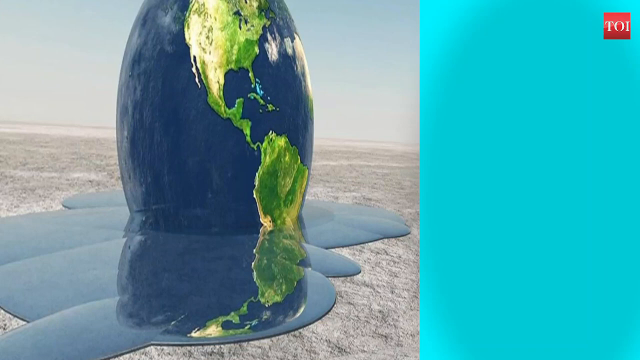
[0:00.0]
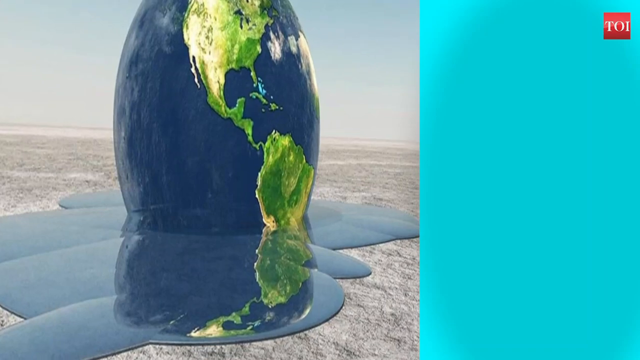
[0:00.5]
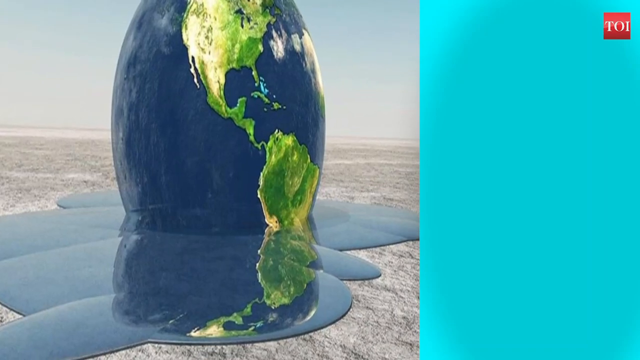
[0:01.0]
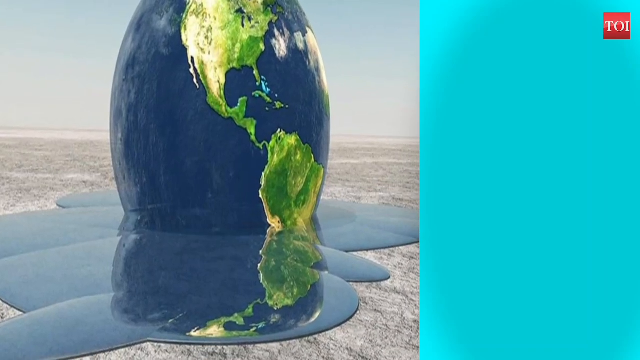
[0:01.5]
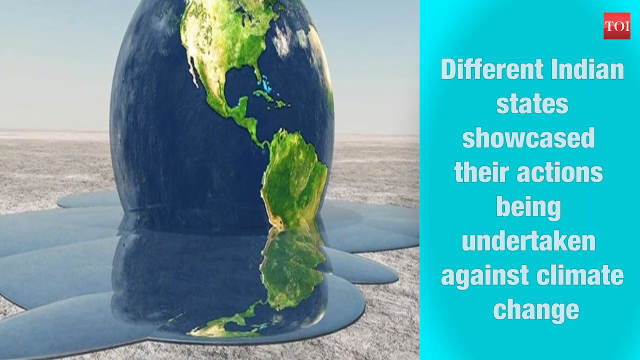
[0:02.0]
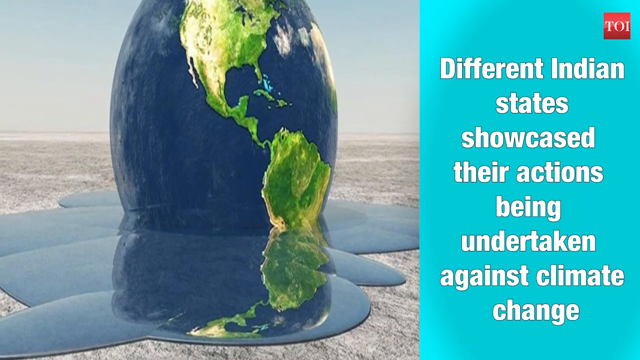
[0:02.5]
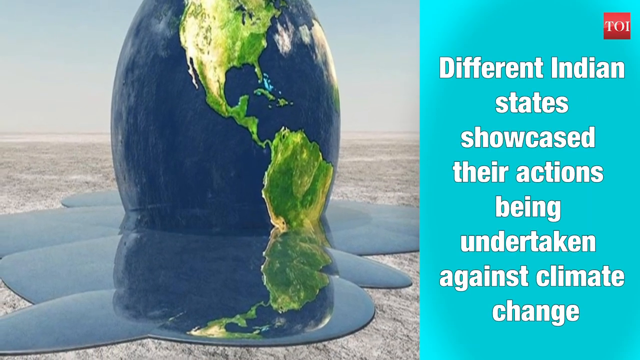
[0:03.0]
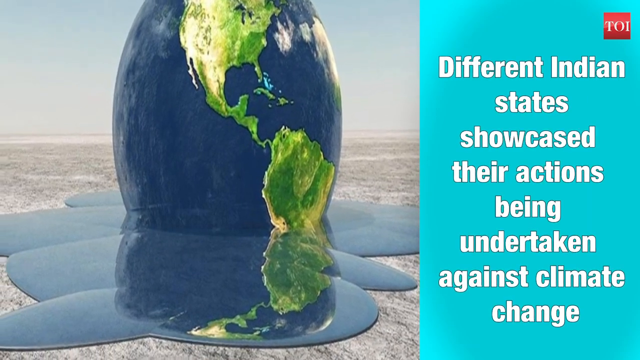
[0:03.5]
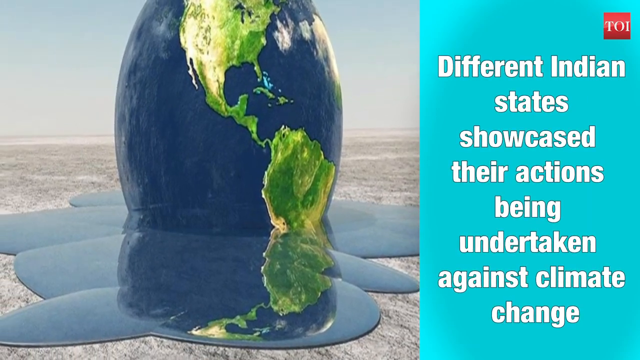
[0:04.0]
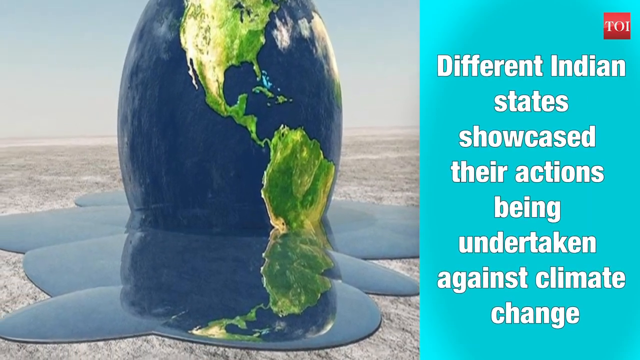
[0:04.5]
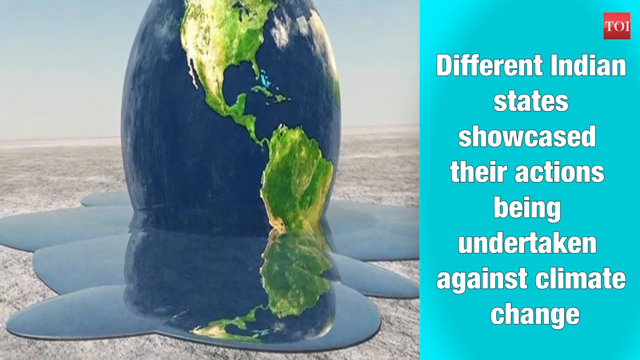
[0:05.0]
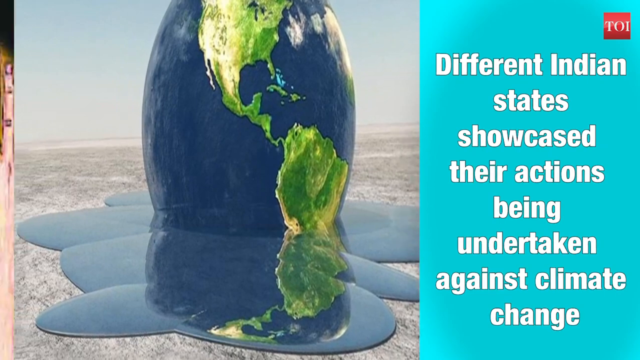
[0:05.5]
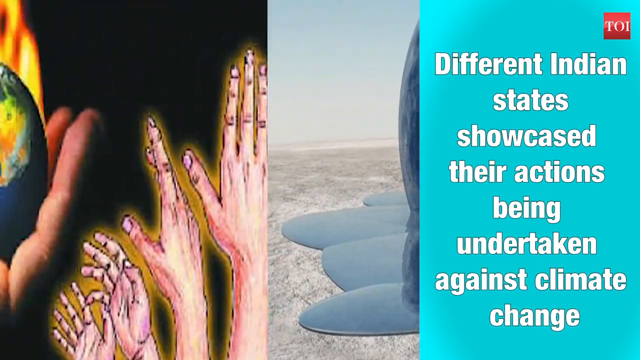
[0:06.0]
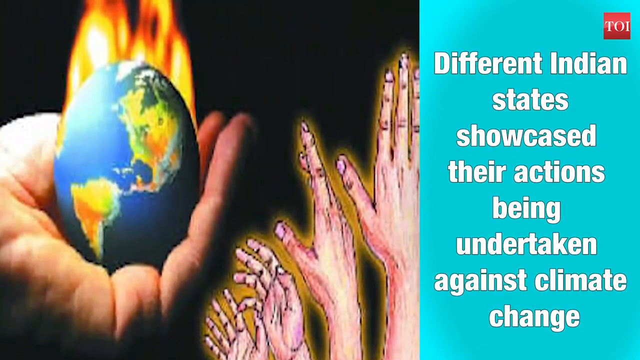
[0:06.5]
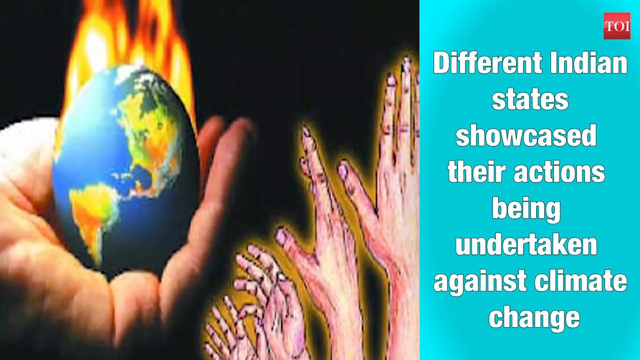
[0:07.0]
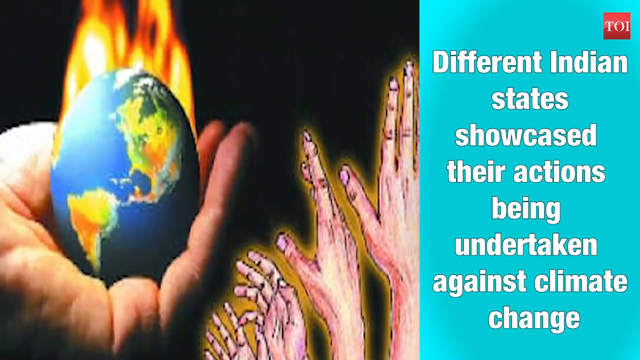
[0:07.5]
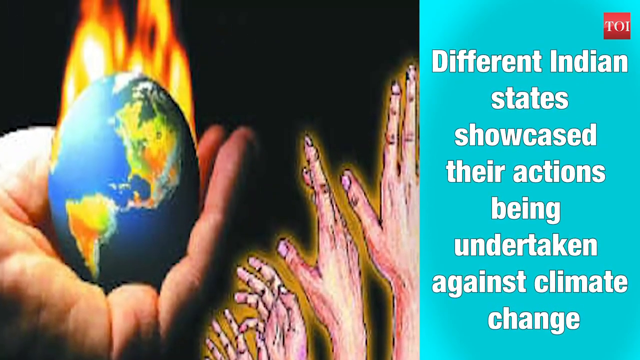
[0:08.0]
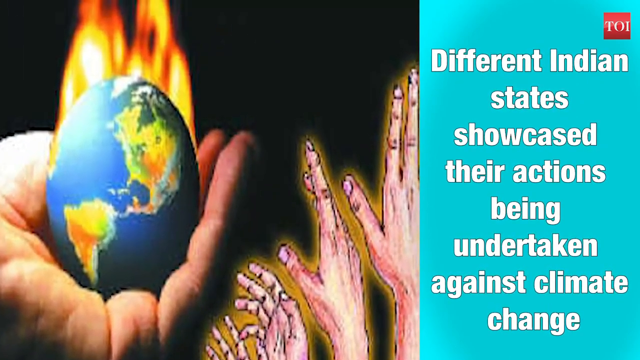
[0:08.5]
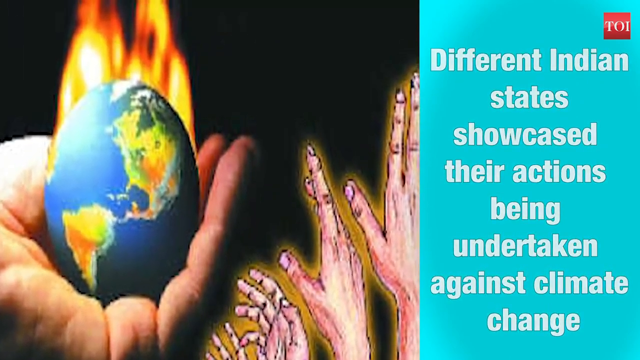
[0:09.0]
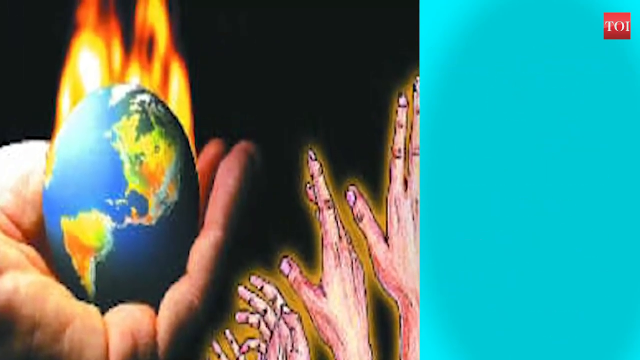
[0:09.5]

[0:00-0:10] On an aqua background, a red square in the upper right-hand corner says "TOI" in white. On the left side is an oblong image of the earth melting into a puddle on something like sand or dirt. It rotates so that its flat side becomes visible, where before a curved side faced the viewer. White text on the aqua section reads "different Indian states showcase their actions being undertaken against climate change", and the earth rotates further. The image then changes to what looks like a very grainy, pixelated stock photo of a hand holding the earth with flames on it, alongside a strange illustrated, glowing set of hands: one placed flat with its thumb out, another kind of curved, and another facing the viewer with its fingers. The shot zooms in on this image.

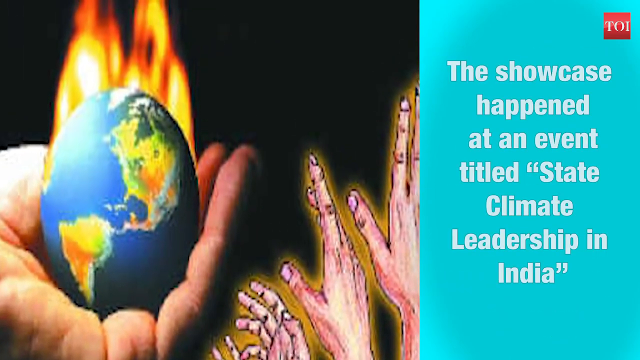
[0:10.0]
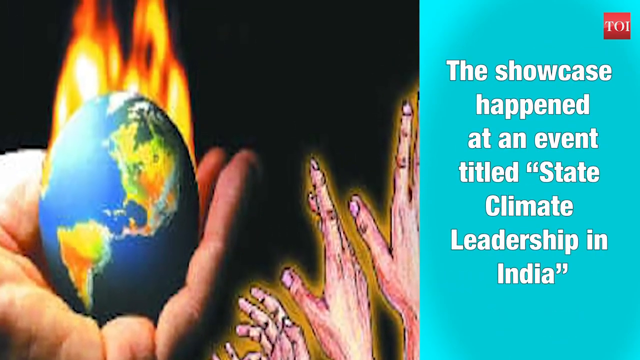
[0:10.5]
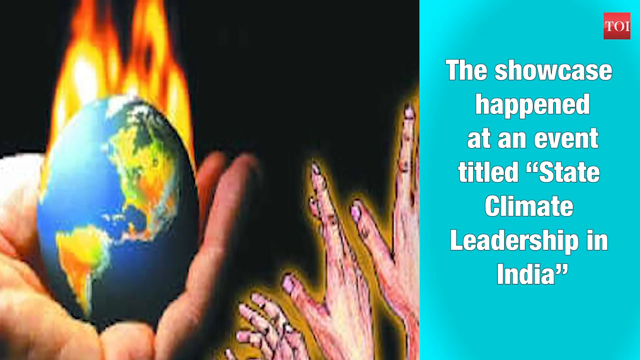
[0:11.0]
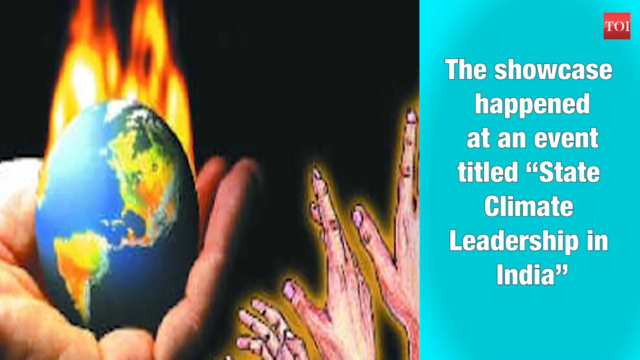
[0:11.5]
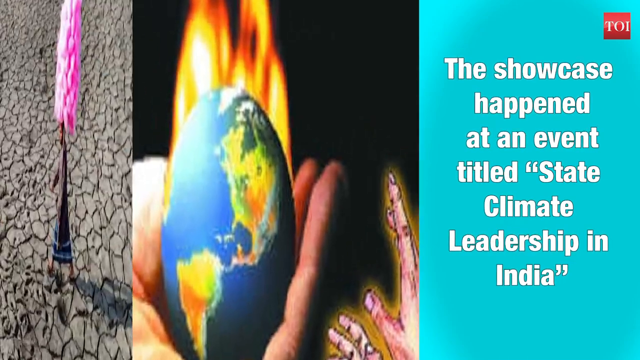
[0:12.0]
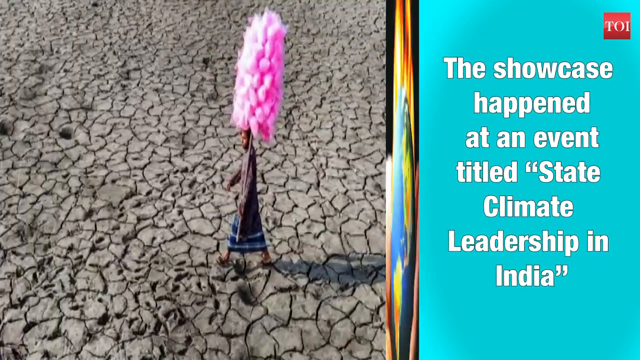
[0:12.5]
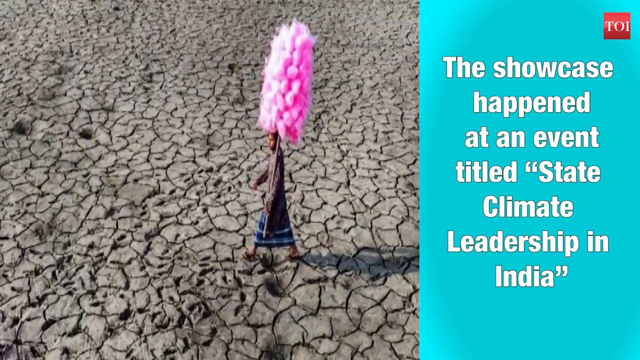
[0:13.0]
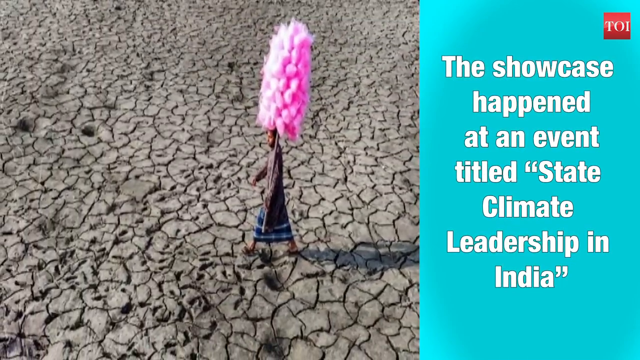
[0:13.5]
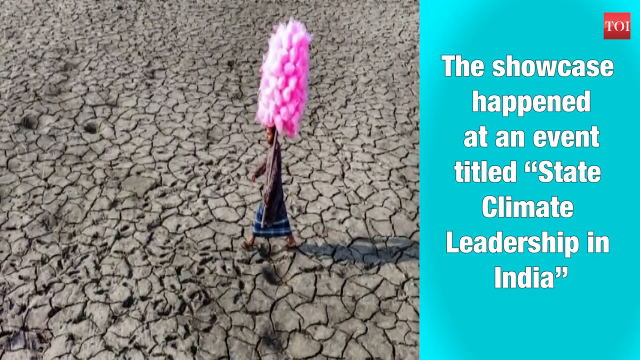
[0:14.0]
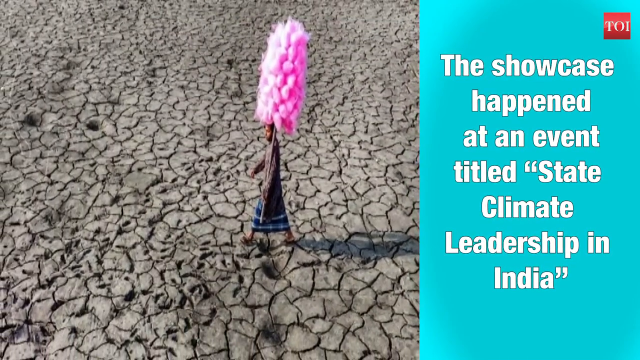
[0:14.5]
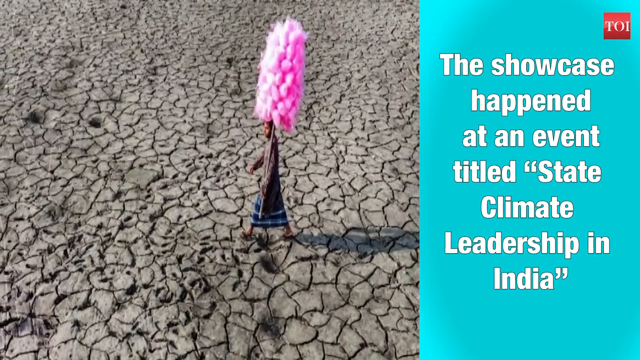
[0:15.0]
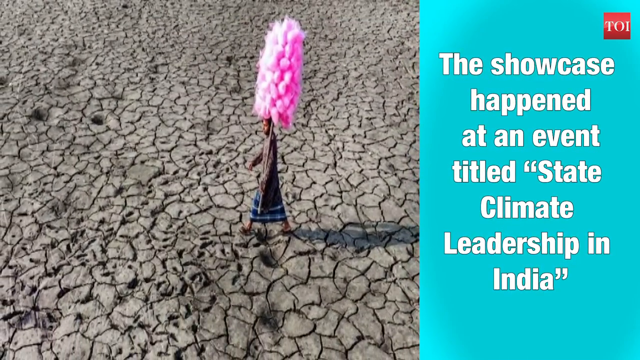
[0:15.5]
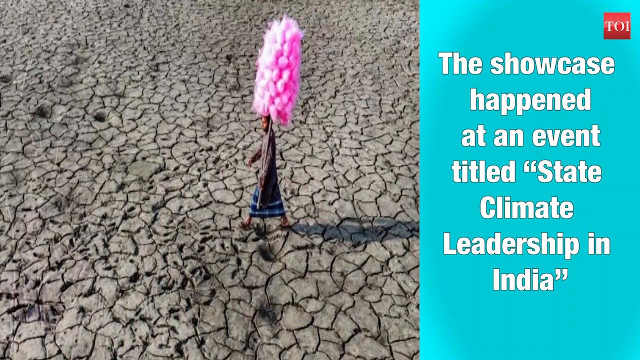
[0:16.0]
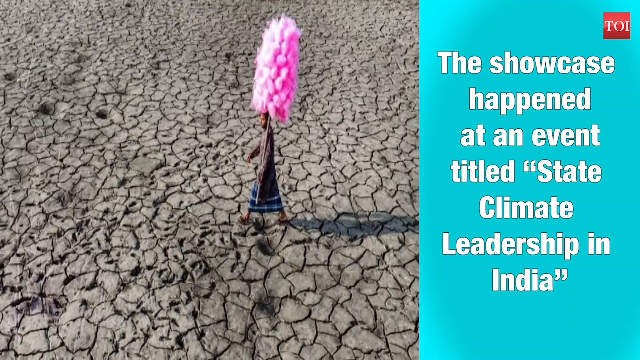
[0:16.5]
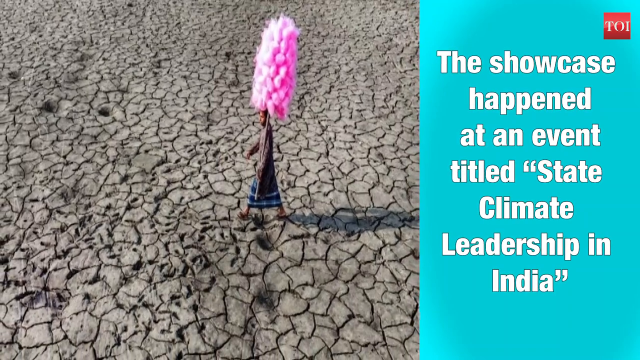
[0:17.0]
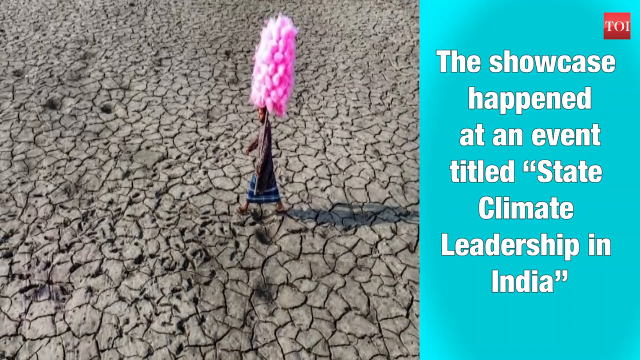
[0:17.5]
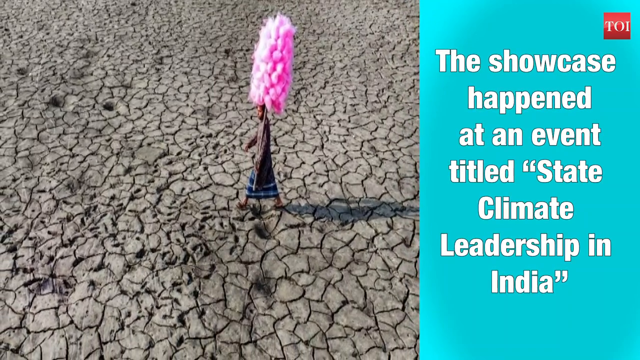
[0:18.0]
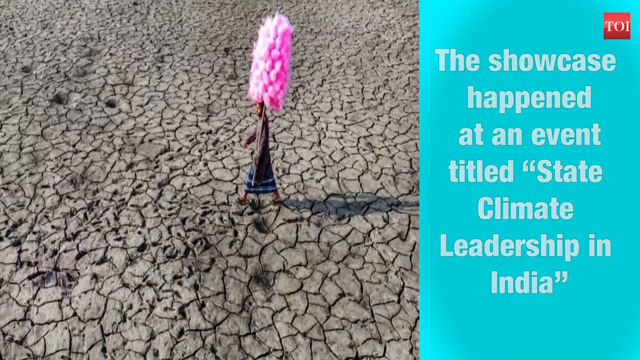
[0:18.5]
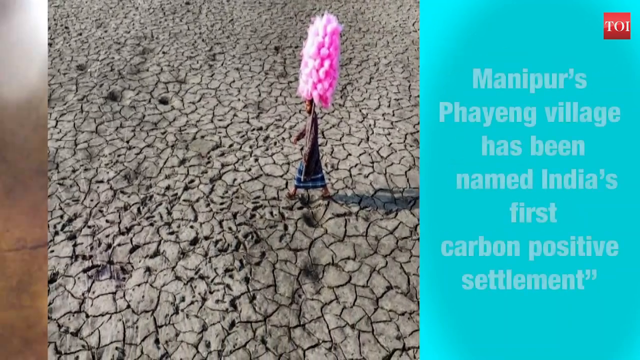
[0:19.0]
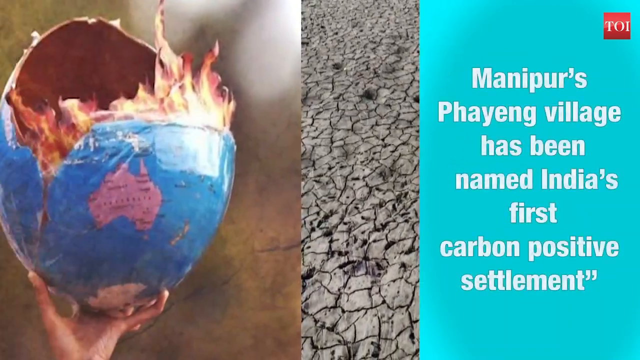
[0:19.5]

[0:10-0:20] A light-skinned hand holds the earth in its palm, cupped around it, and the earth has flames all over it, set on a black background. Next to it is a poorly made illustration of three hands, also light-skinned: one is a right hand facing away with the thumb out, with only part of it visible showing the thumb, pointer and middle fingers; the one next to it is kind of curved away; and only the bottom of another hand is visible, facing the viewer with its fingers forward. Beside the image is an aqua section with a small red square that says "TOI" in white, and white text on the aqua part reads "the showcase happened at an event titled state climate leadership in India". The video cuts to a very grainy image of very dry earth that almost looks like skin cells, with what appears to be a person wearing some kind of long ethnic costume, seemingly holding something that almost looks like cotton candy above his head. The shot zooms out of that image, and the image changes to the earth kind of opened up like an opened-up baseball, on flames. Text on the aqua section reads "Manipur's faying village has been named India's first carbon positive settlement".